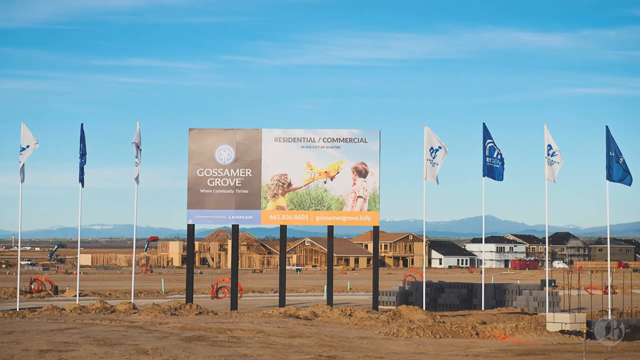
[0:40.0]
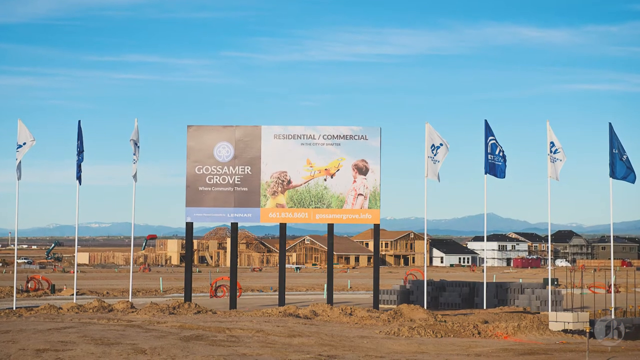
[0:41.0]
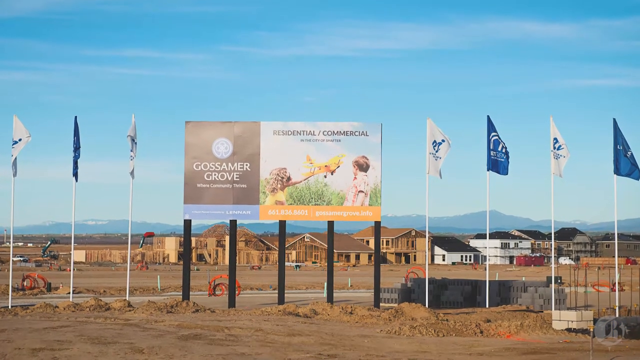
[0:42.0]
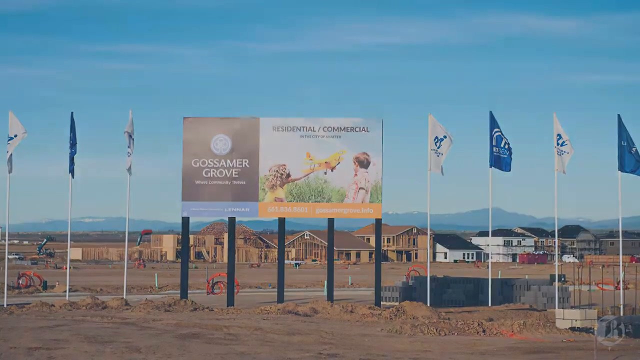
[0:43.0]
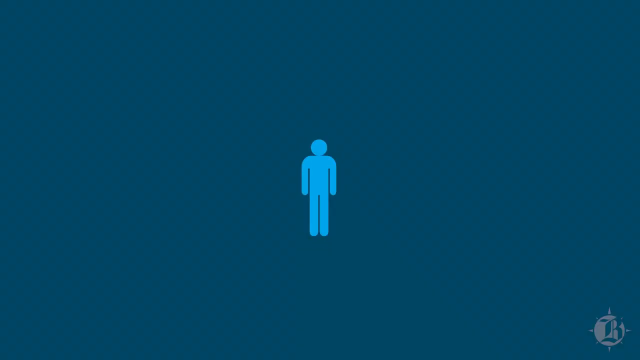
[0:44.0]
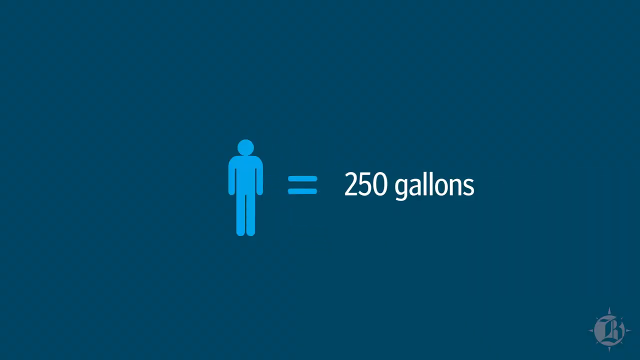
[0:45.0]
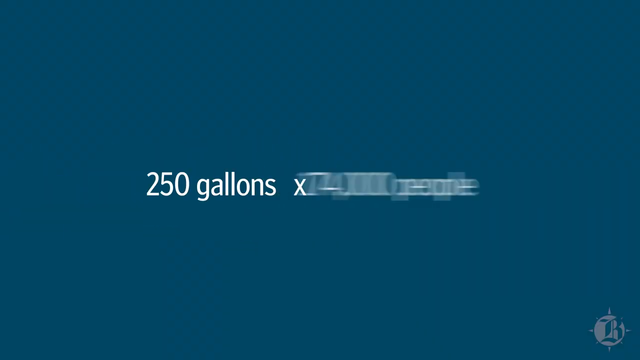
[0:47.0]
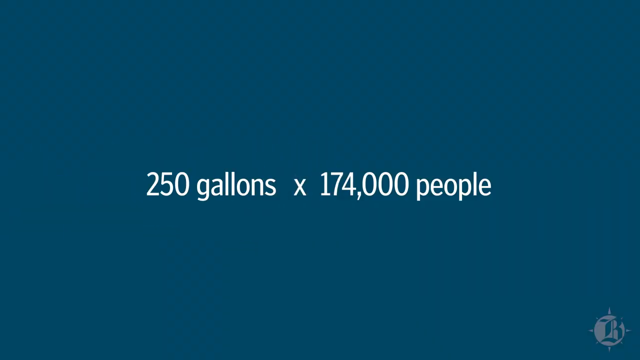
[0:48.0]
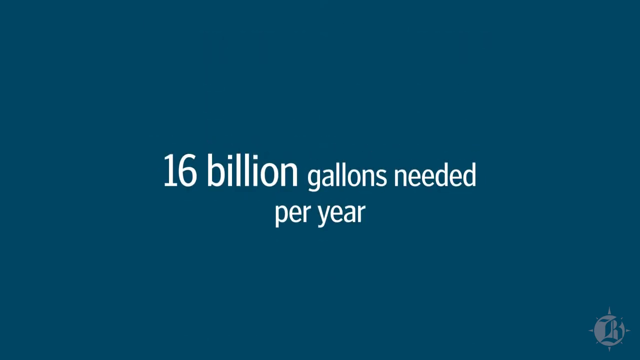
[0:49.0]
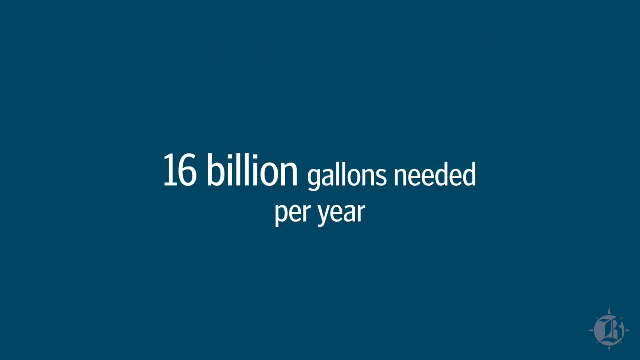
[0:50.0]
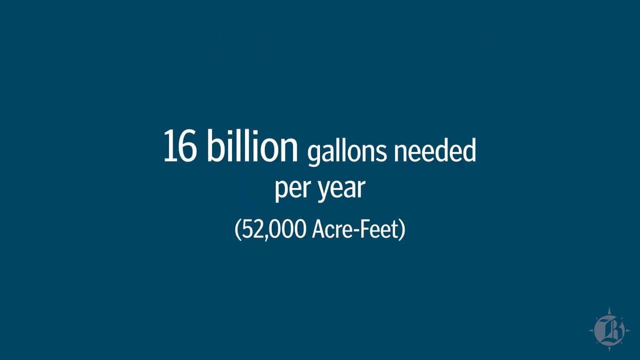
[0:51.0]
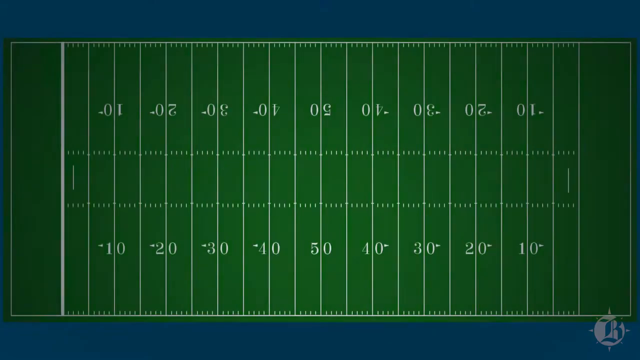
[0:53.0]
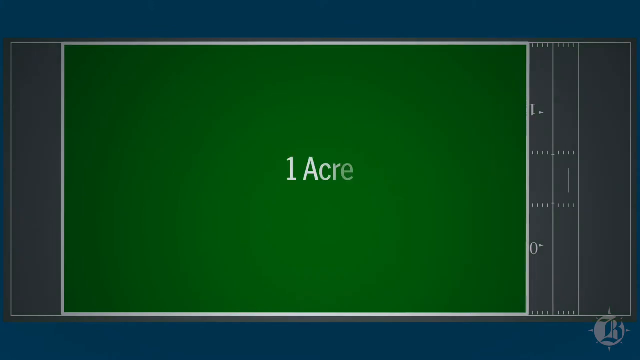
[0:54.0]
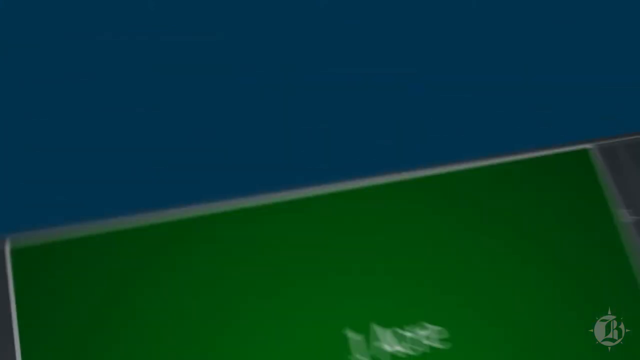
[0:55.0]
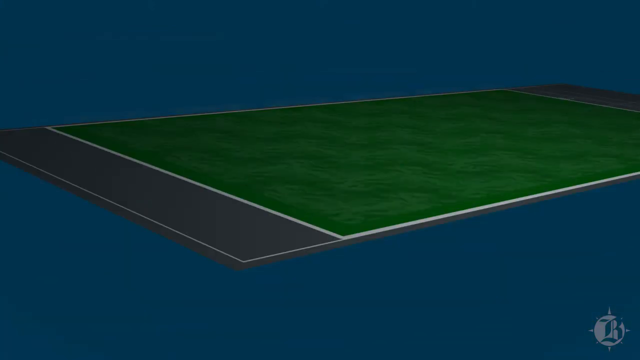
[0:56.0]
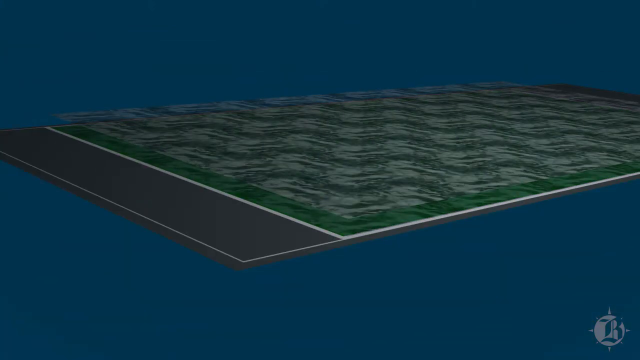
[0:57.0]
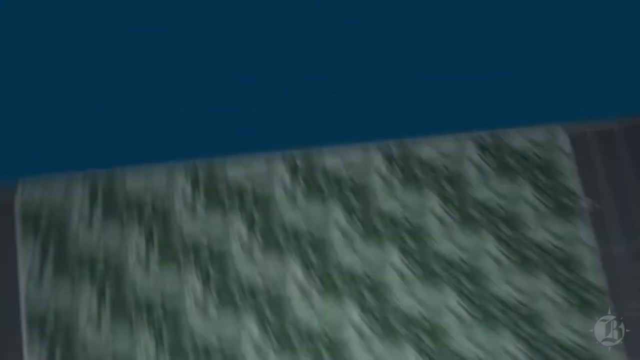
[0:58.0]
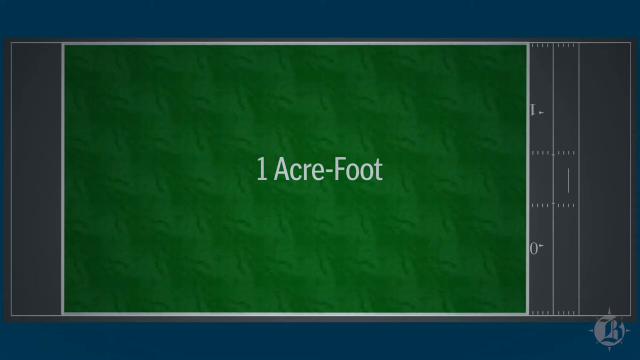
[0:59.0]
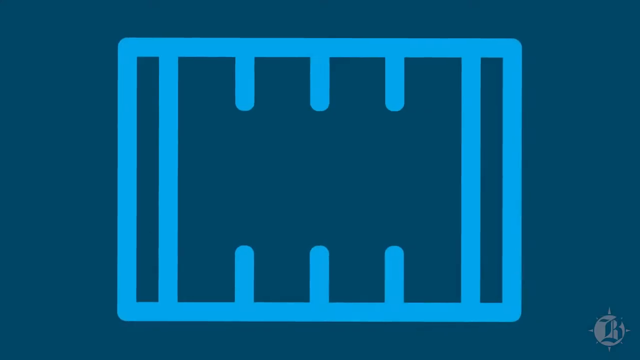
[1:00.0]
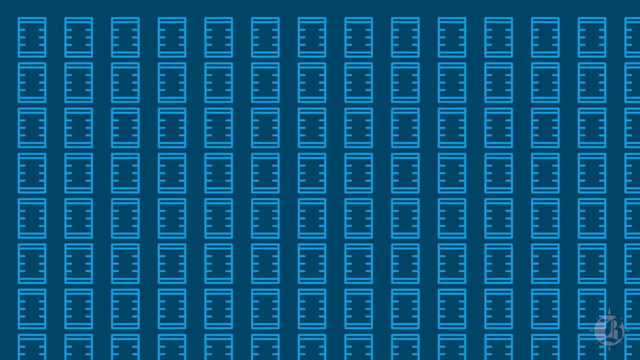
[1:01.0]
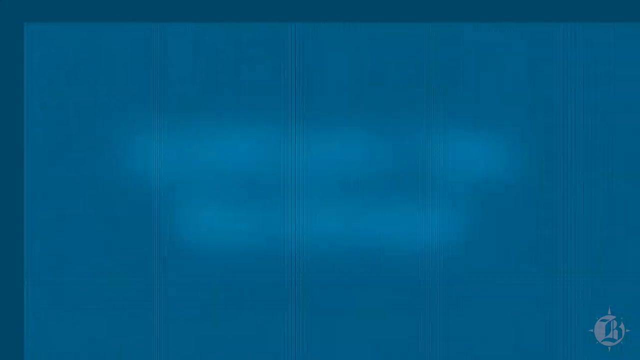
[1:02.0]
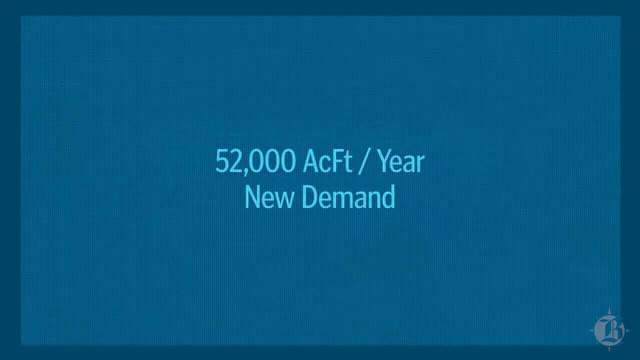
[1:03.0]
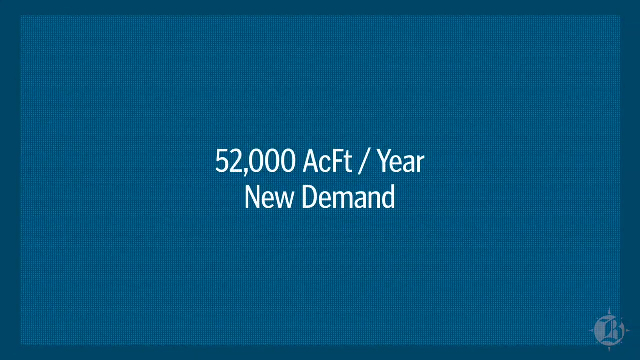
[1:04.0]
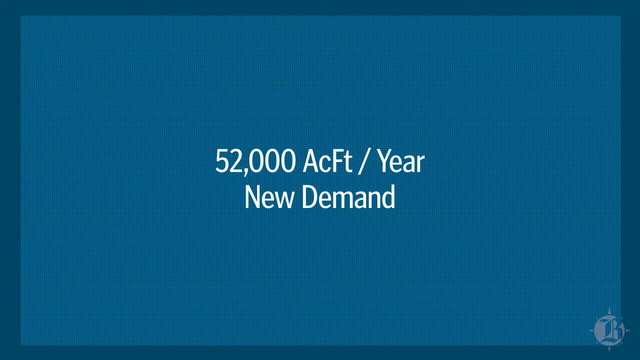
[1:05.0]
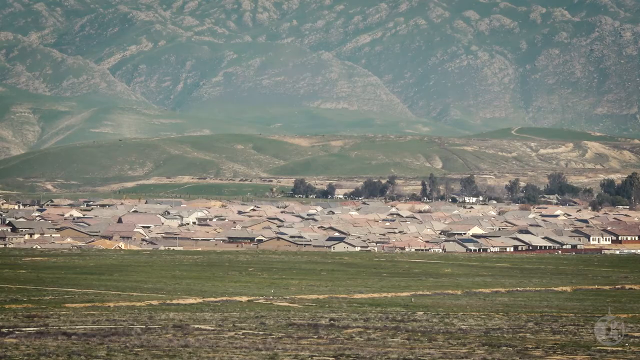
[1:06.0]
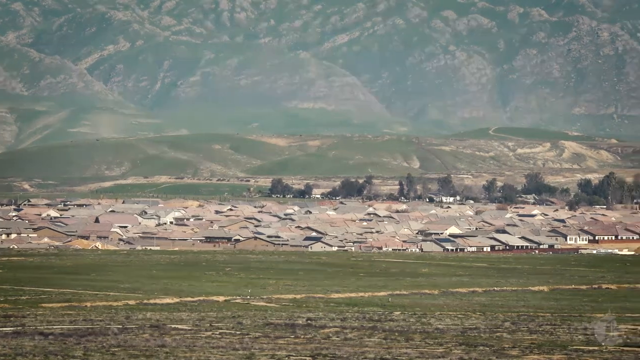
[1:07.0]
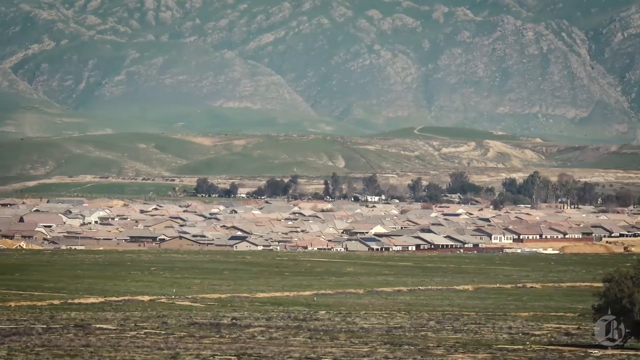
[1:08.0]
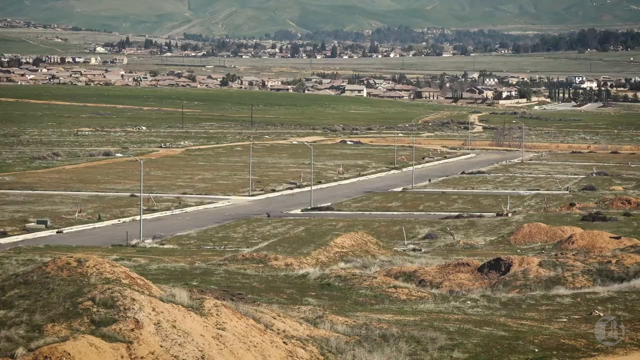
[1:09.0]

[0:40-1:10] The view slowly zooms in, showing pieces of large orange tubing or wiring spooled up in different areas of the property. On the right of the screen is what looks like a pile of concrete, like bricks, with something like grooves in them. Some large red trash cans are in the very back. The blue screen returns, showing clip art of a person in blue with the equal sign. Text appears reading "250 gallons," then changes to "250 gallons times 174,000 people." Next, text reads "16 billion gallons needed per year," with "52,000 acre feet" in parentheses below. A drawing of a football field with the yards marked appears. A green square appears over it reading "1 Acres" and floats sideways across the screen, then fills the screen and reads "1 acres-foot." A blue icon of the football field appears and flies up to the upper left corner, then the entire screen fills with the icon, and then they vanish. Text appears reading "52,000 acre feet/year" with "new demand" below it. Next is a rocky mountain with sparse trees and a lower hillside with grass. Down below is a large area of homes with brown rooftops and dark-leaved trees behind that section of homes, and a large mass of green grass is in the foreground. The view then hovers to the right over an unmarked street running through a large area of land with grass that is not very full or green. A few mounds of dirt are in the foreground, white streetlamps line the street, and homes are in the far distance.